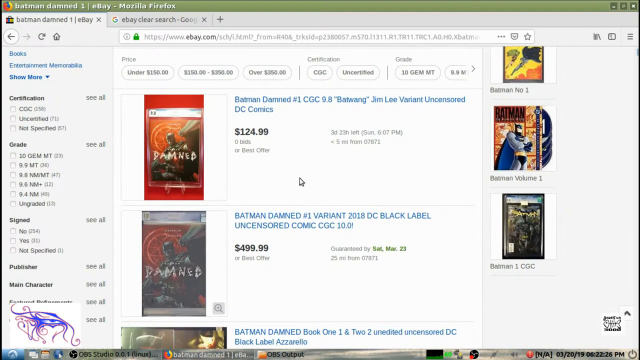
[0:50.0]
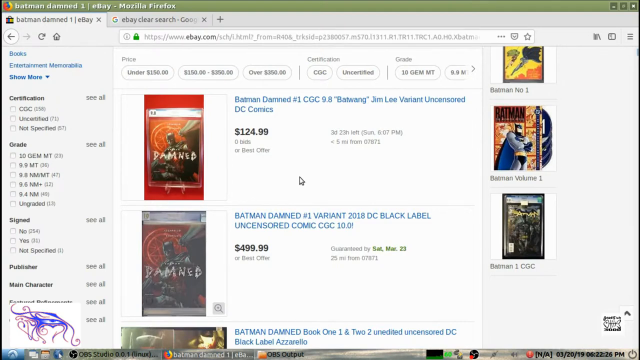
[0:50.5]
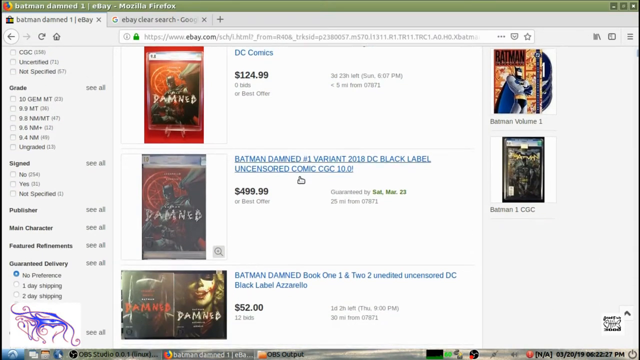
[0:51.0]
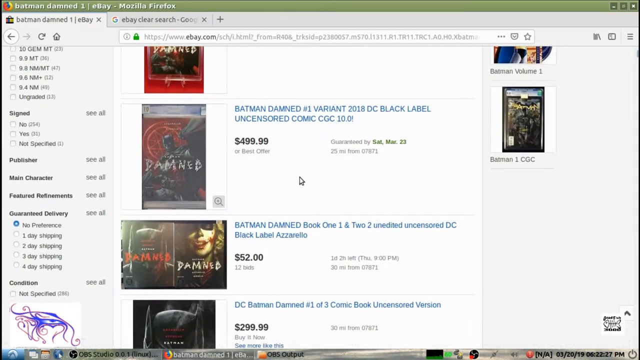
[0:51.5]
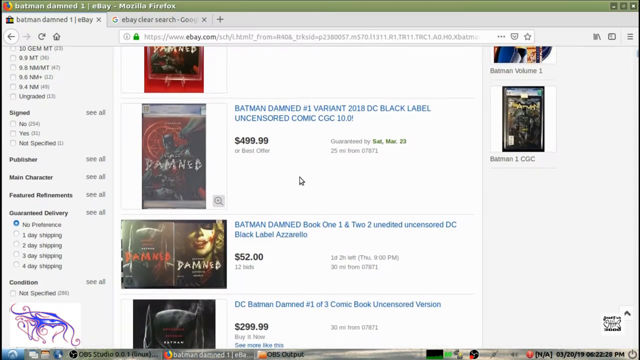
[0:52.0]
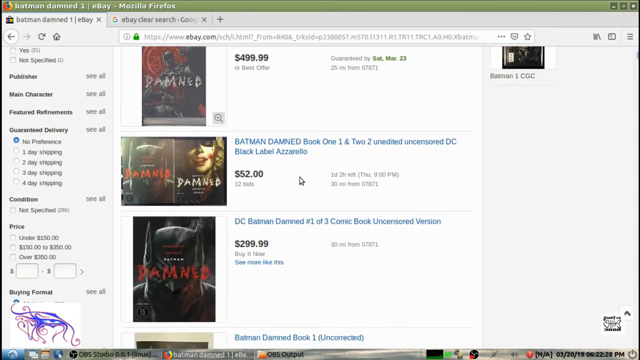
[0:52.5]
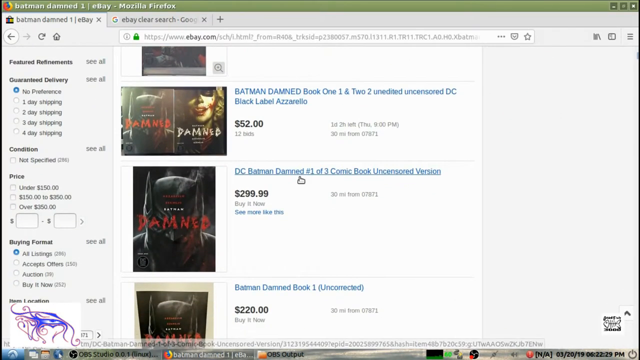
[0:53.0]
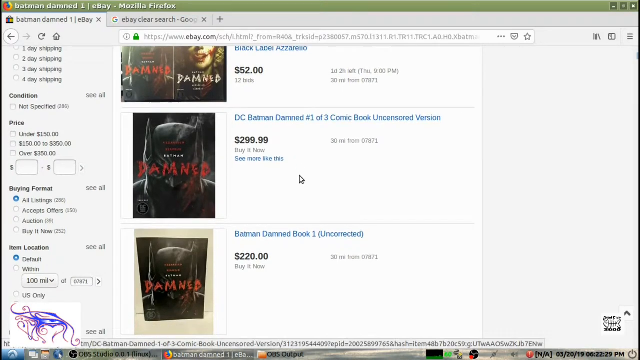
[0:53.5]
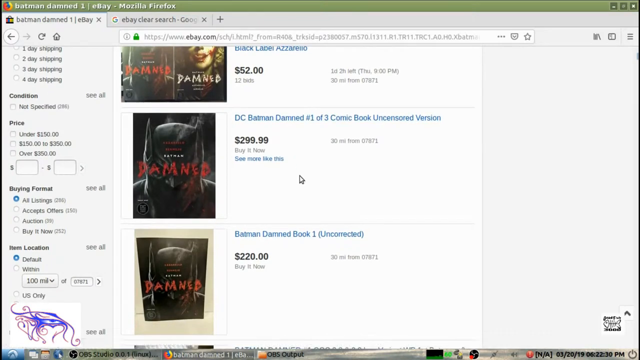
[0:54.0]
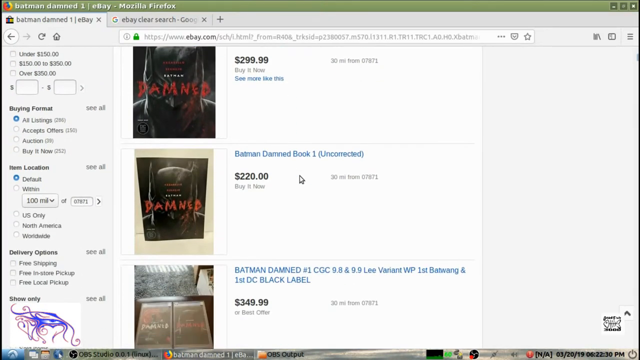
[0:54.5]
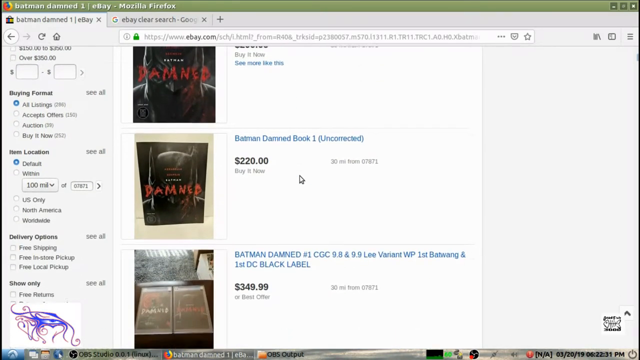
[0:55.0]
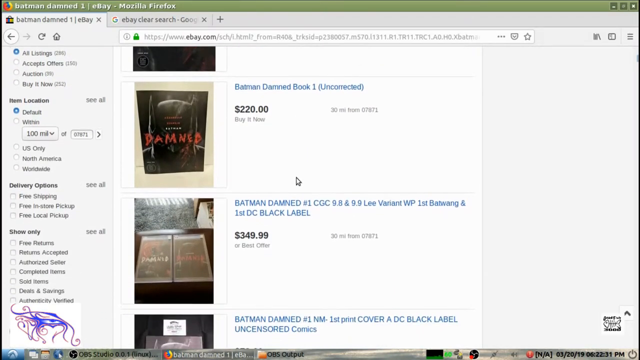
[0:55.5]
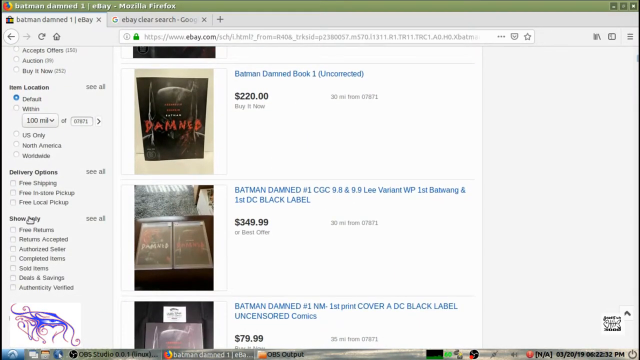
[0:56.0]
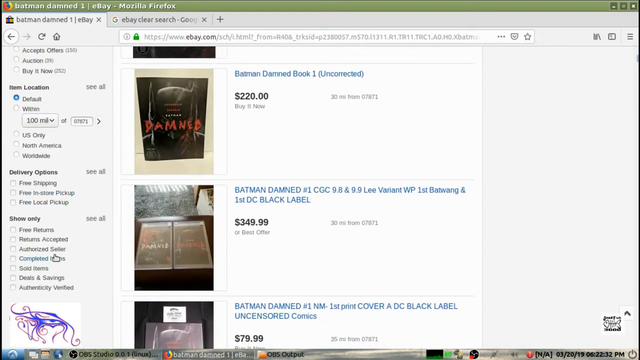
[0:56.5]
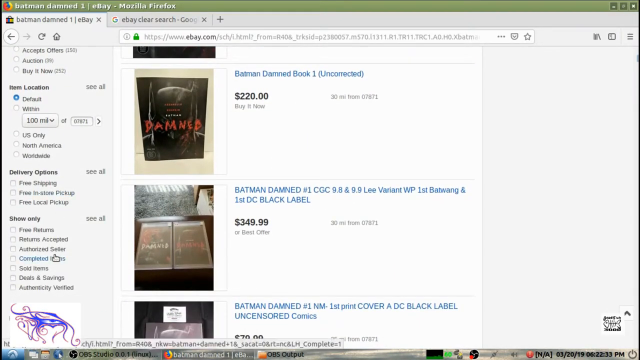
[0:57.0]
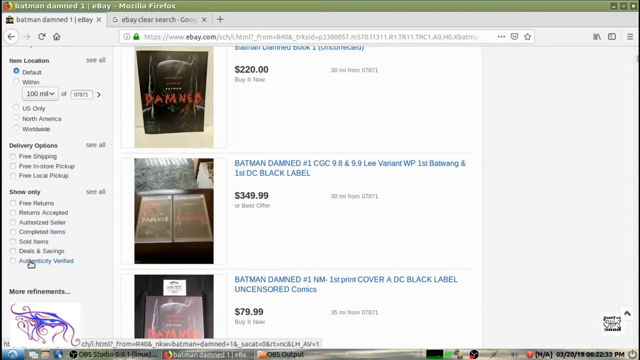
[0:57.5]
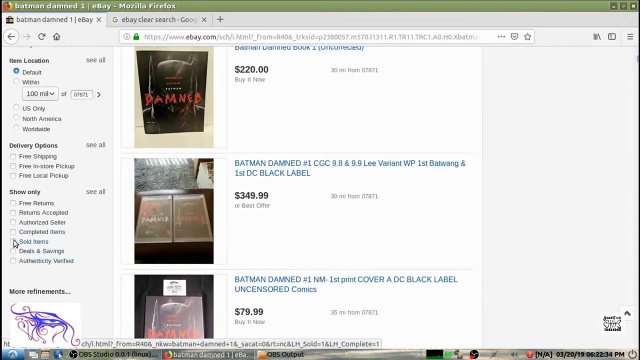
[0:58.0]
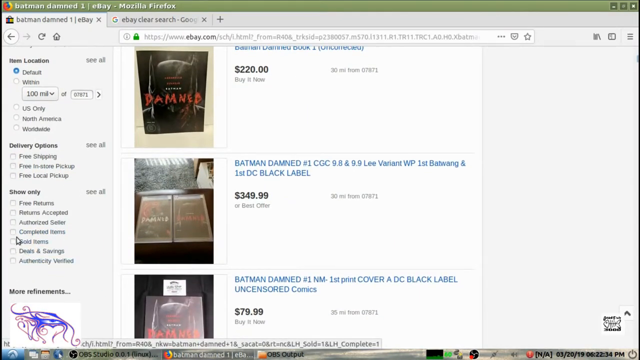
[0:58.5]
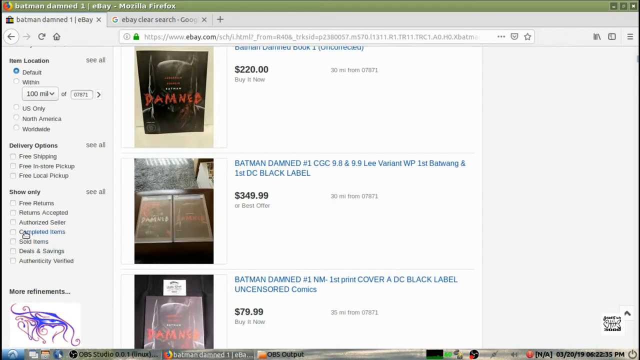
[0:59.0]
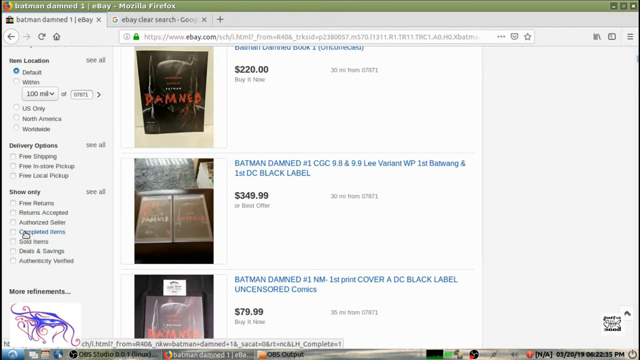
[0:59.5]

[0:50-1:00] The user scrolls down through the list of comic books, all of them pertaining to Batman. They then move the mouse pointer to a filter list on the left side and hover over the selection that says "completed items." The filter list, titled "Show only," includes the selections "free returns," "returns accepted," "authorized seller," "completed items," "sold items," "deals and savings" and "authenticity verified."